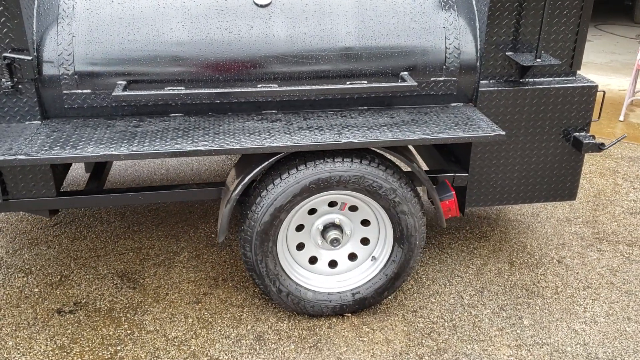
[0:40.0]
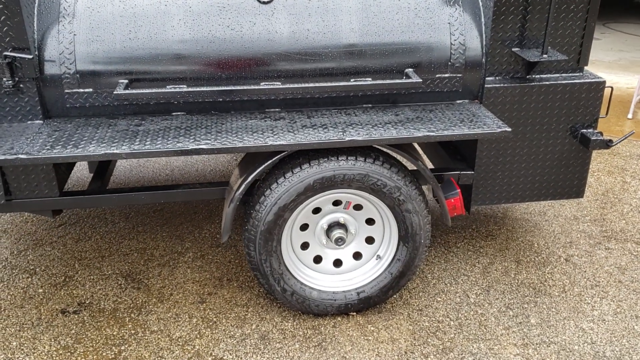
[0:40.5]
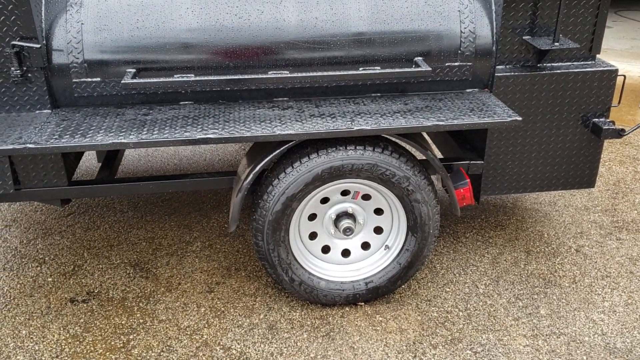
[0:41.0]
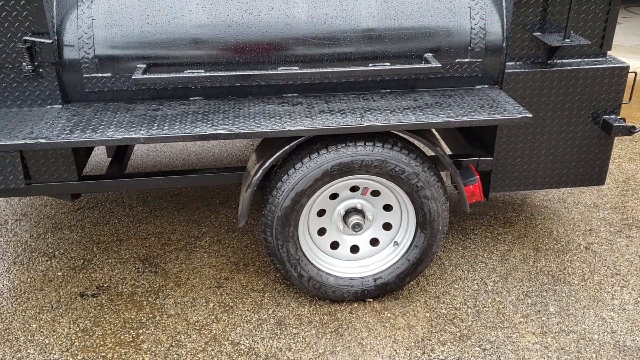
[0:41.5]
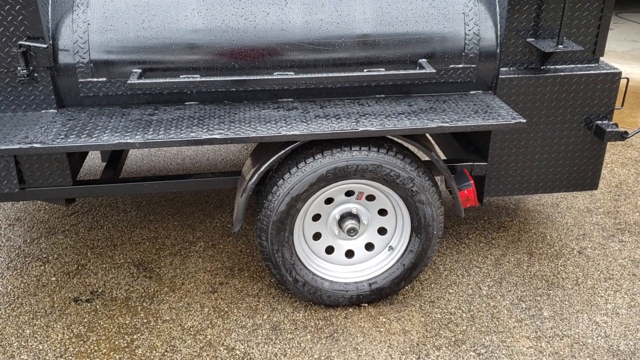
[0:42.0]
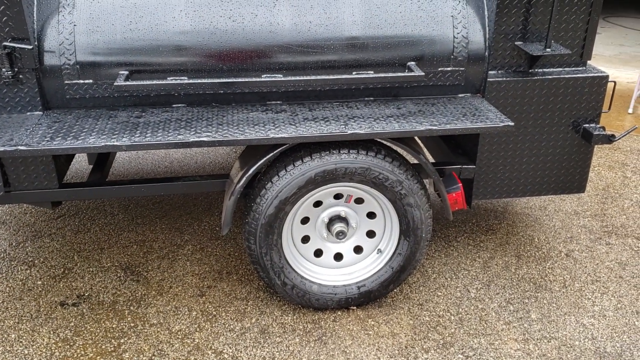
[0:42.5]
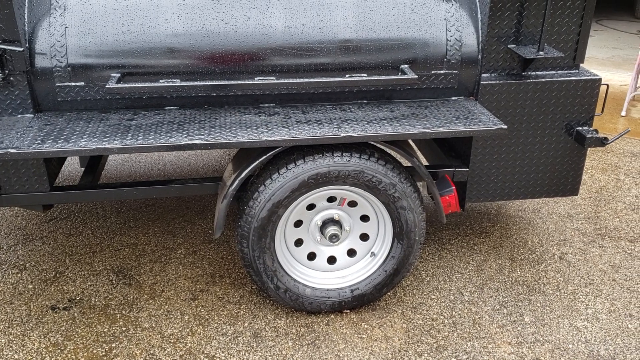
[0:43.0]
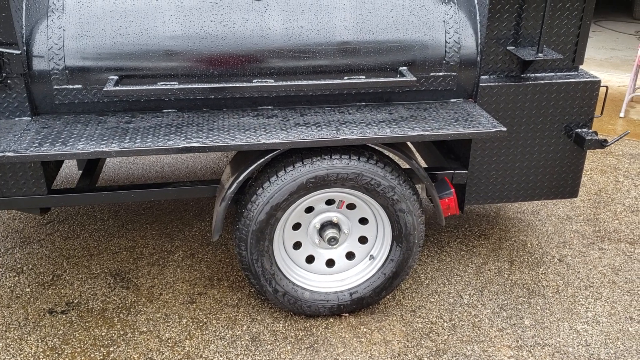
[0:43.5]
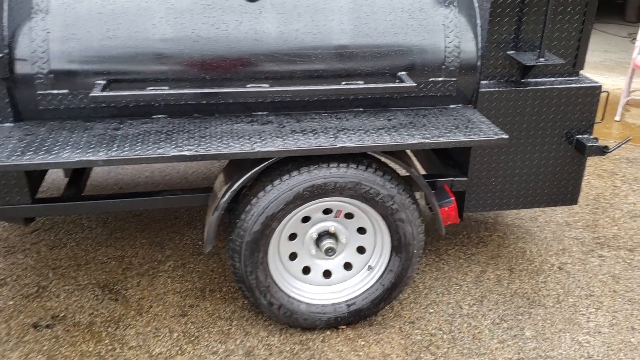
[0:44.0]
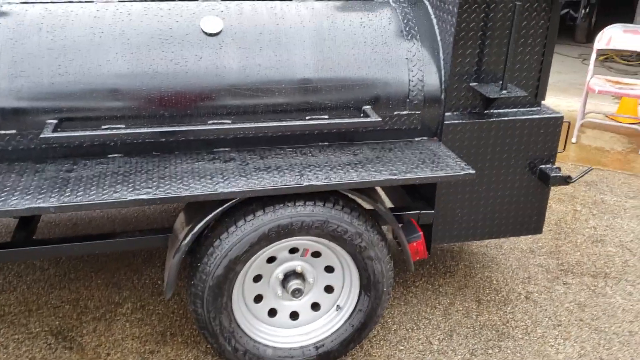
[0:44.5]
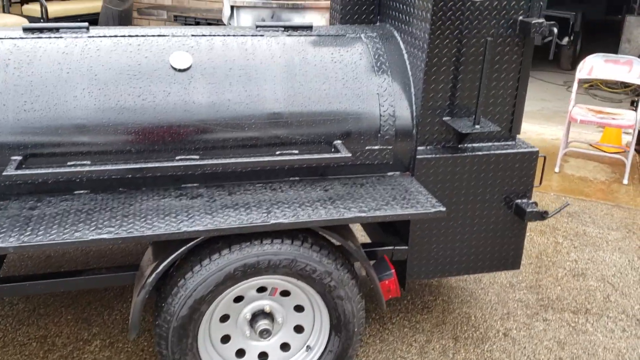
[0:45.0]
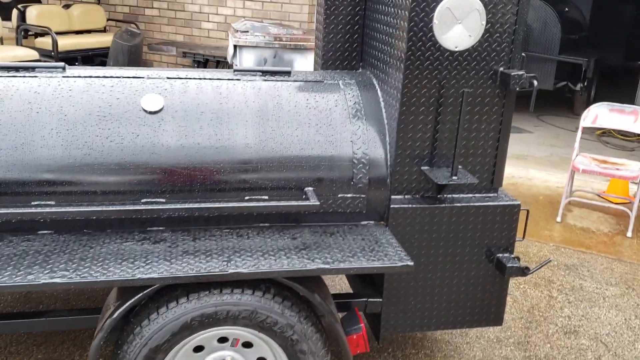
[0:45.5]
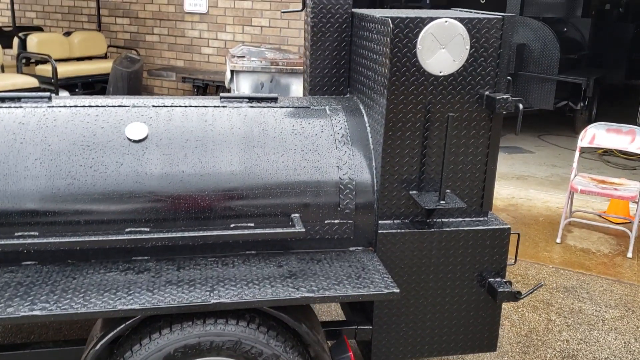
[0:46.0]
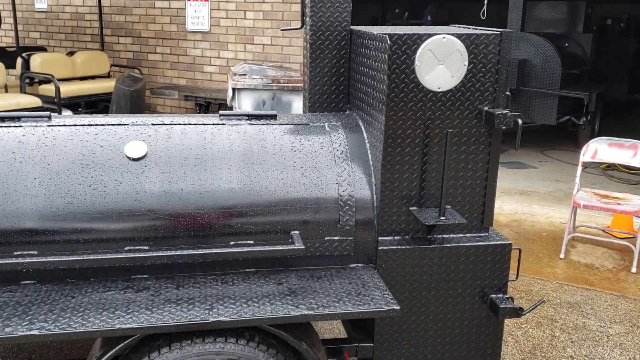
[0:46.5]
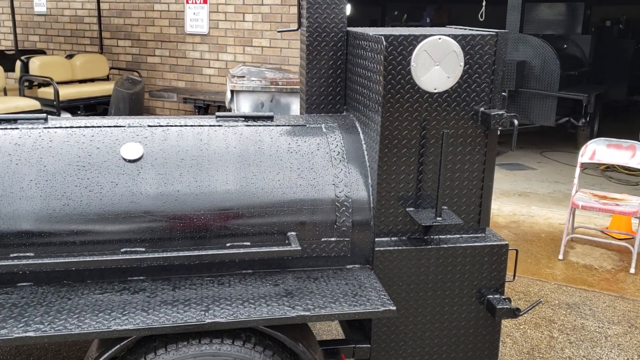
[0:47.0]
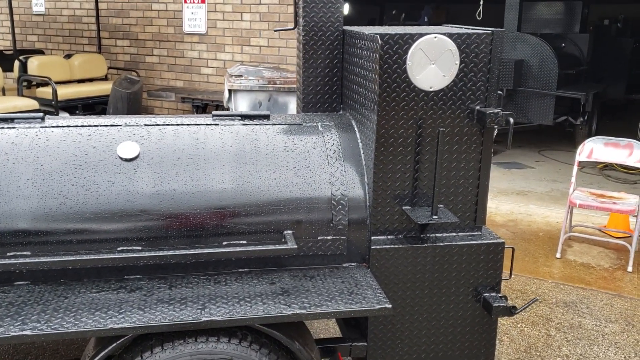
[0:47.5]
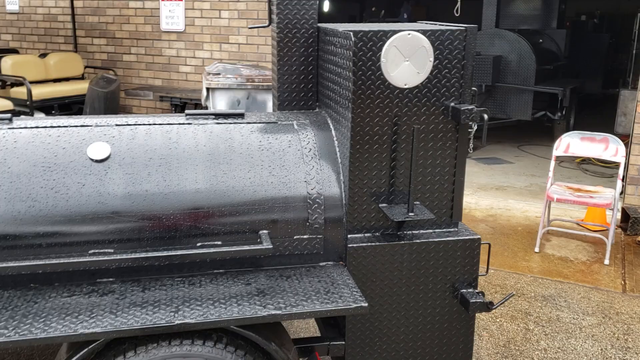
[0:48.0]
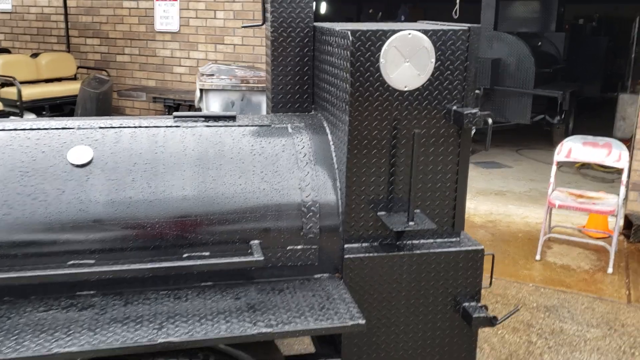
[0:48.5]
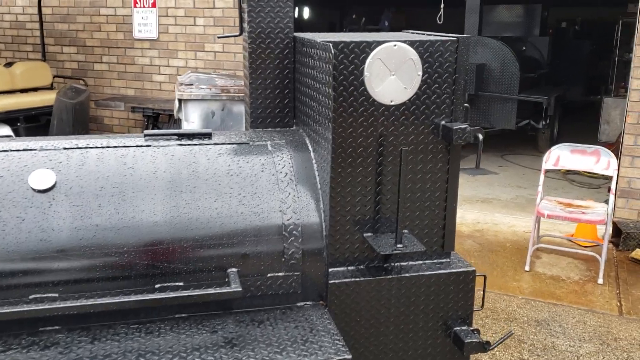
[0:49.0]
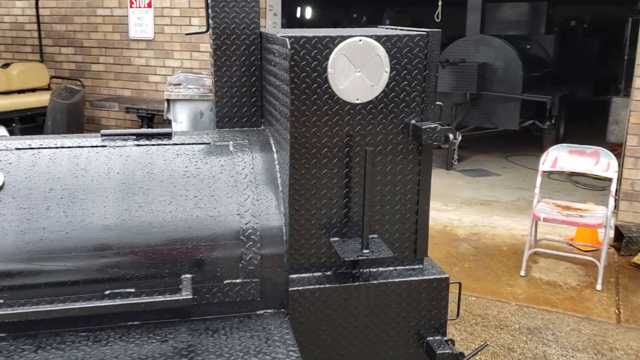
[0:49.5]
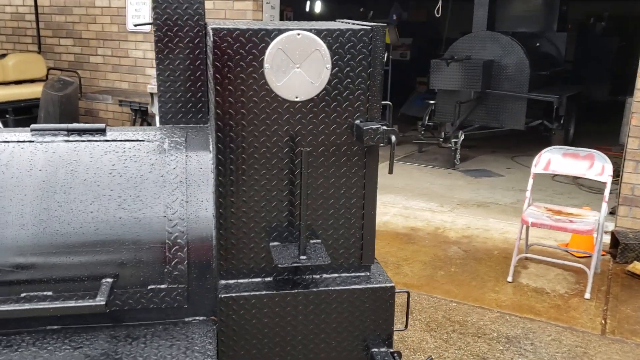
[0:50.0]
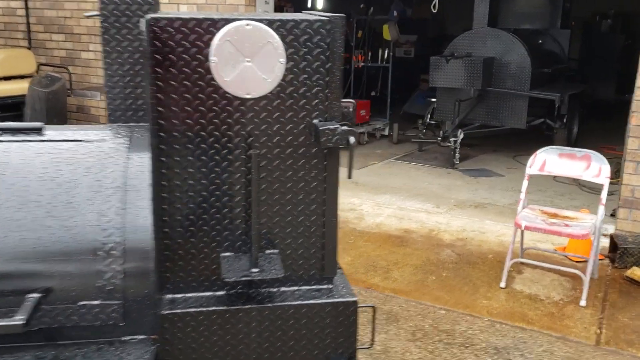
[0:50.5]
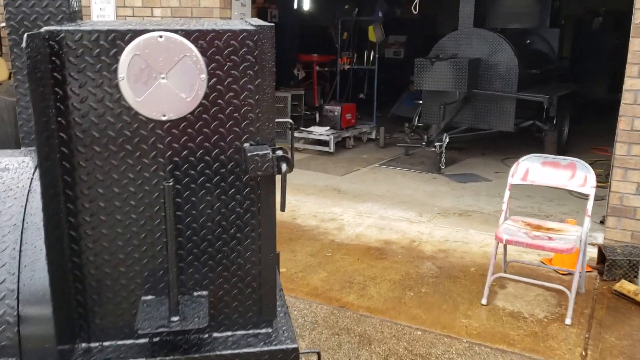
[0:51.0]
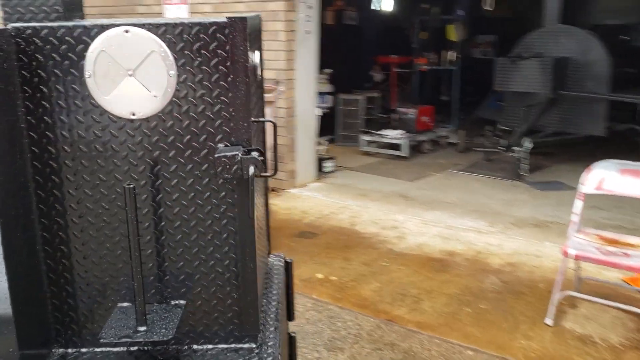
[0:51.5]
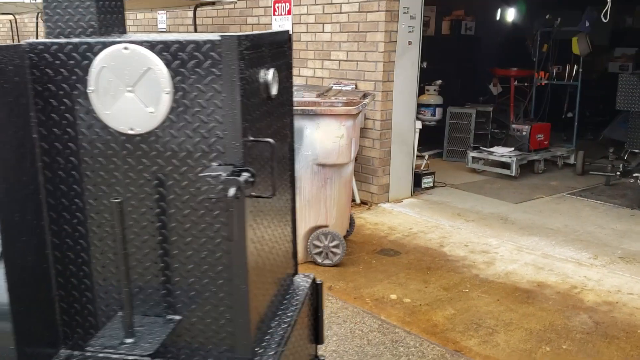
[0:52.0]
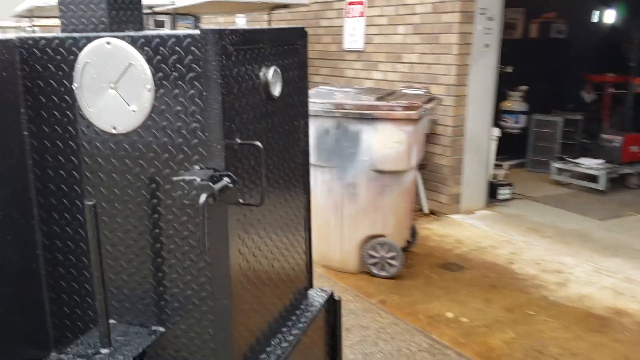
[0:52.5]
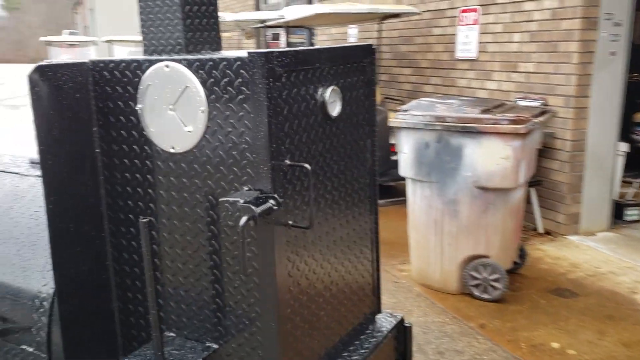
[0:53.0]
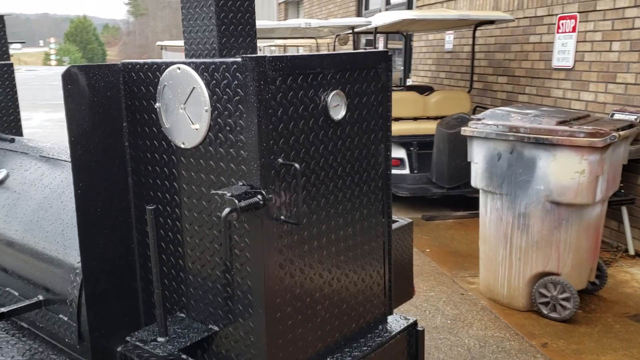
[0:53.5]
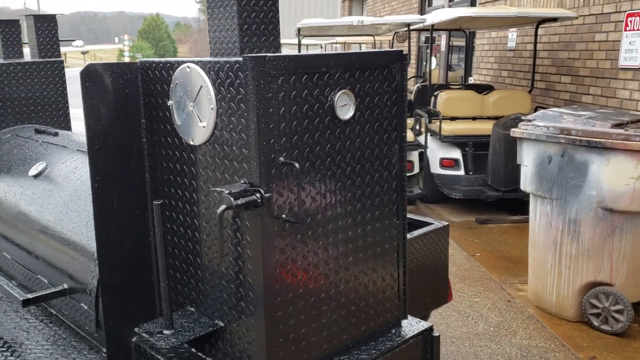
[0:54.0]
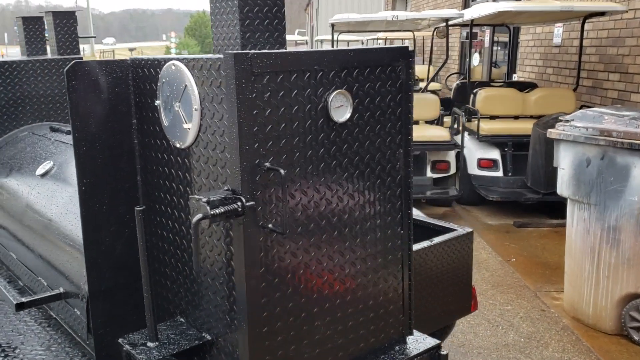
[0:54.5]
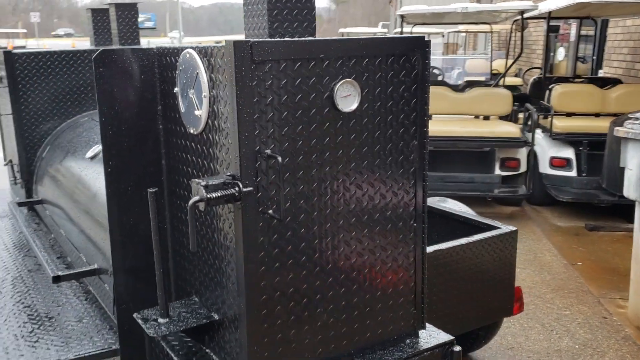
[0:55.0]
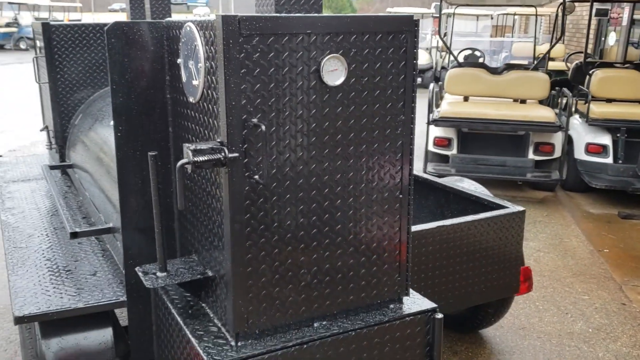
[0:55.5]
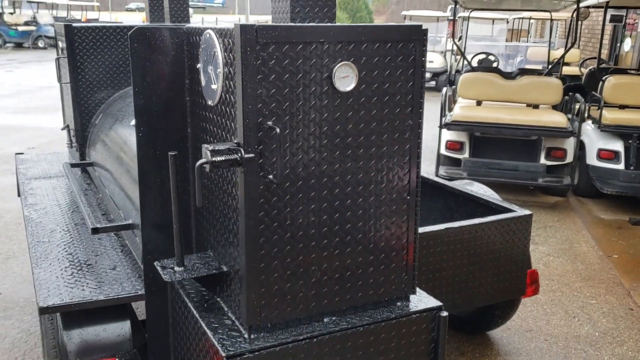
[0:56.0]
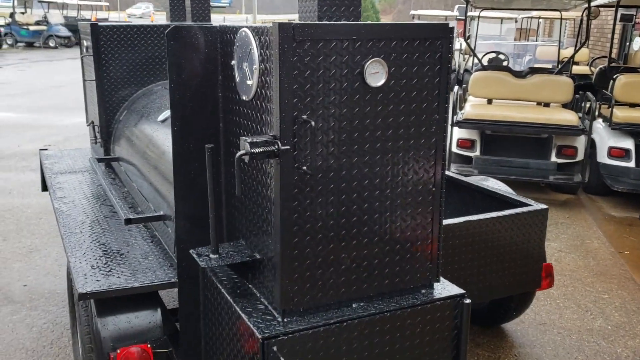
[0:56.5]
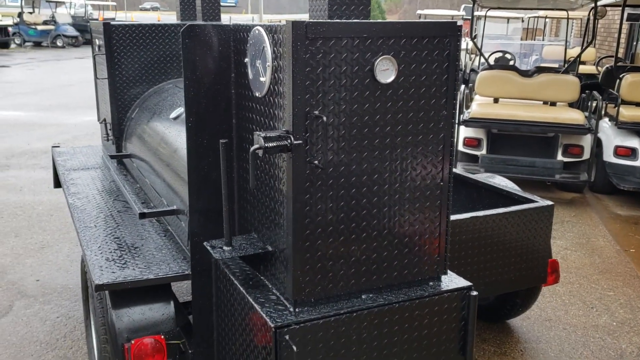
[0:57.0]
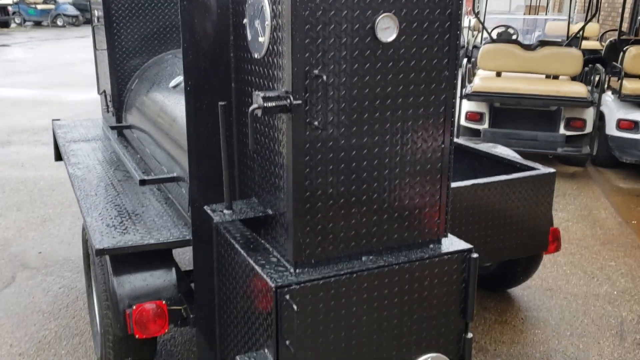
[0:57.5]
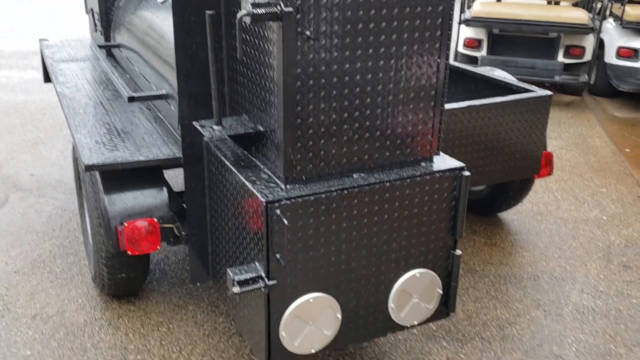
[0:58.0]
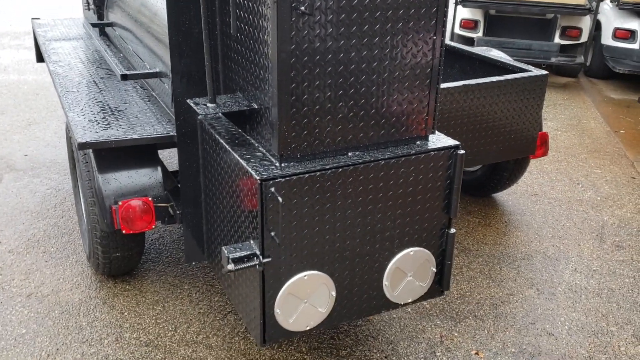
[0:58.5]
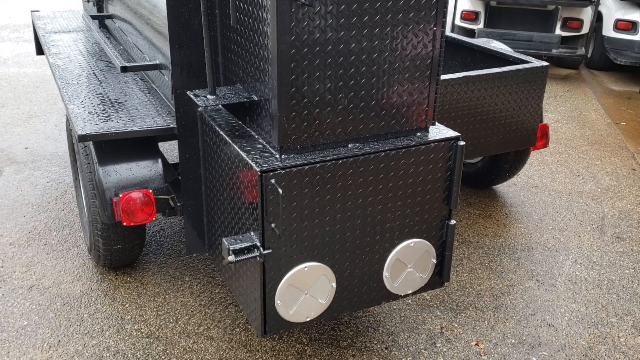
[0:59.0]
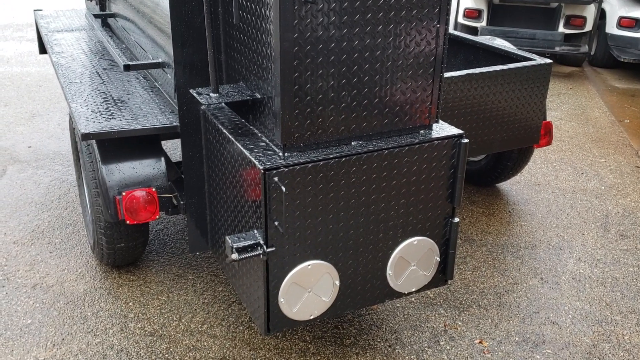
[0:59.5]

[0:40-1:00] Another black trailer or braai stand stands inside the storeroom. There is a red chair, and the white rubbish bin stands in front of the storeroom door. The braai stand is big and black. On the other side, many golf cars are standing, some blue, some black and some white. There is a yellow container, and inside the storeroom there are some materials. Water droplets are on top of the braai stand, and the rubbish bin looks like it has been painted white and grey. The place looks wet, as if it was raining. Cars are passing on the road, and the chair is still there.